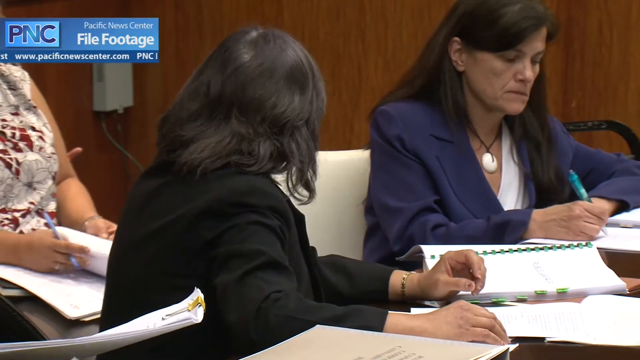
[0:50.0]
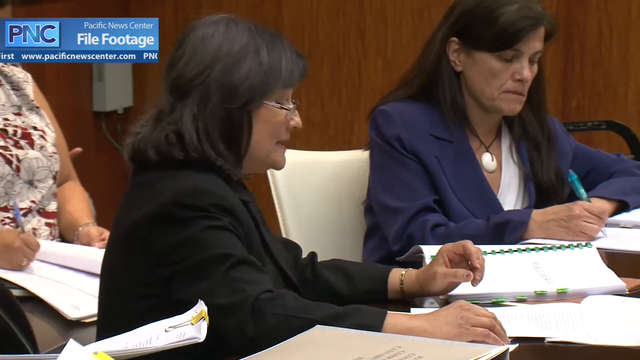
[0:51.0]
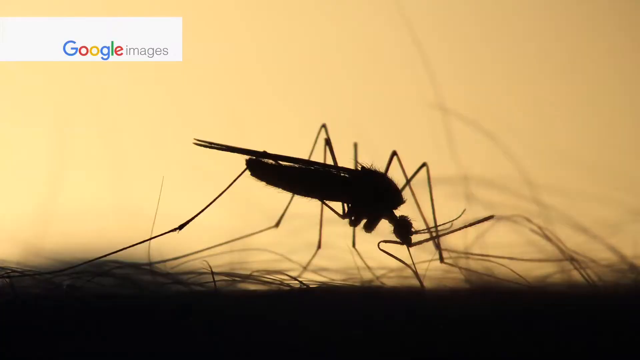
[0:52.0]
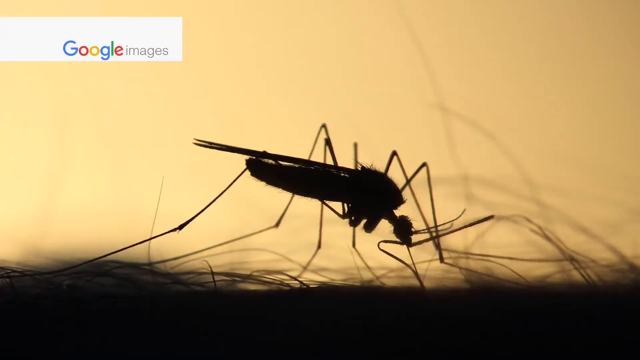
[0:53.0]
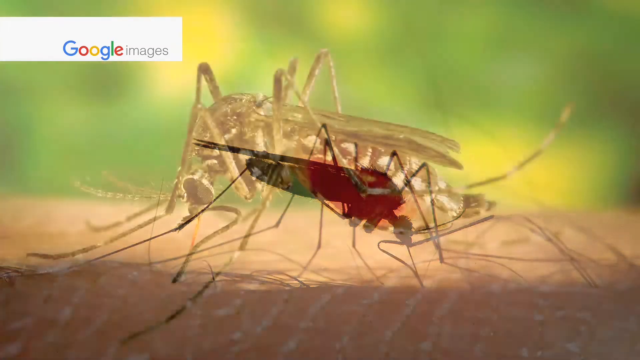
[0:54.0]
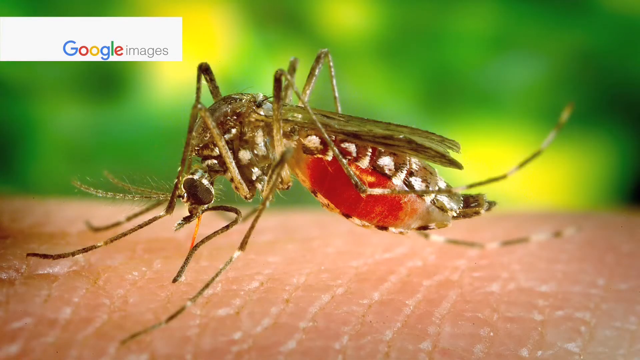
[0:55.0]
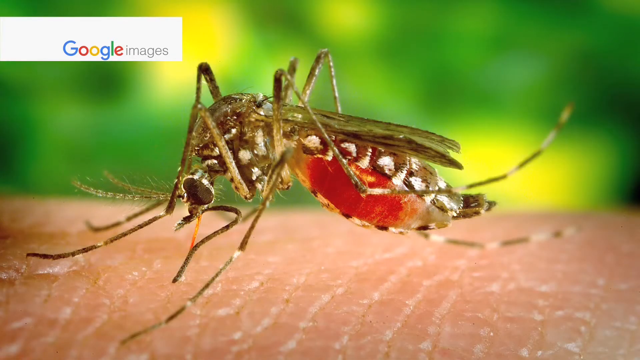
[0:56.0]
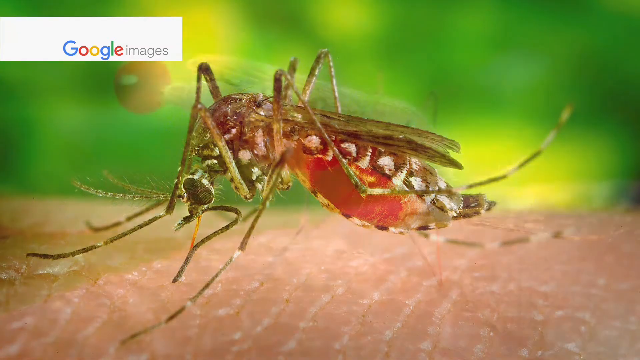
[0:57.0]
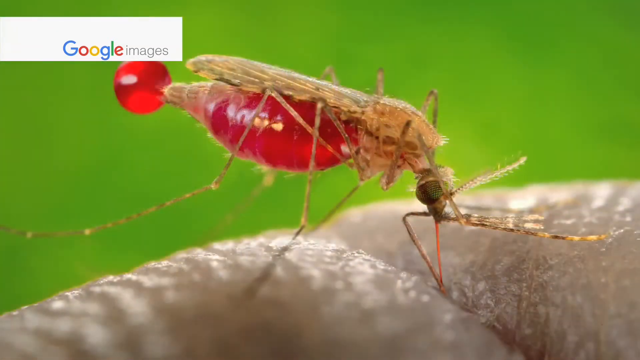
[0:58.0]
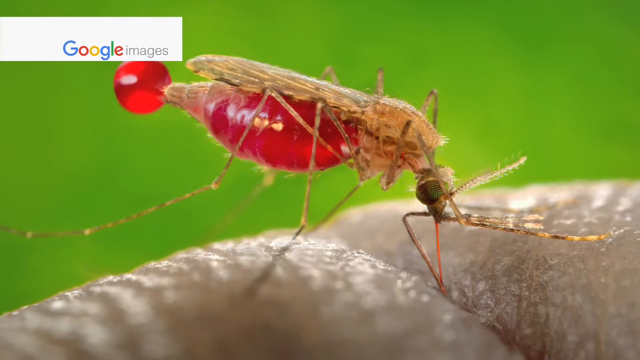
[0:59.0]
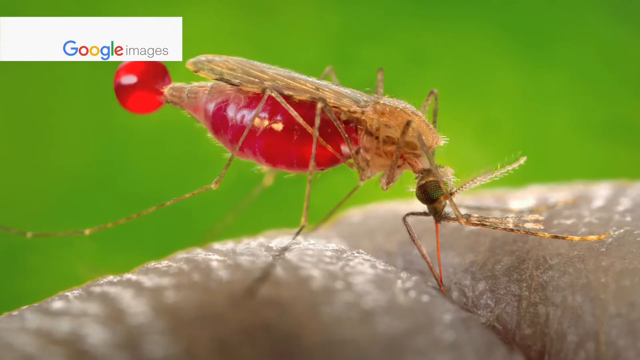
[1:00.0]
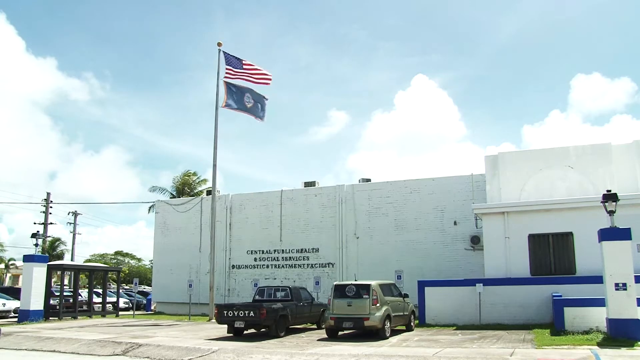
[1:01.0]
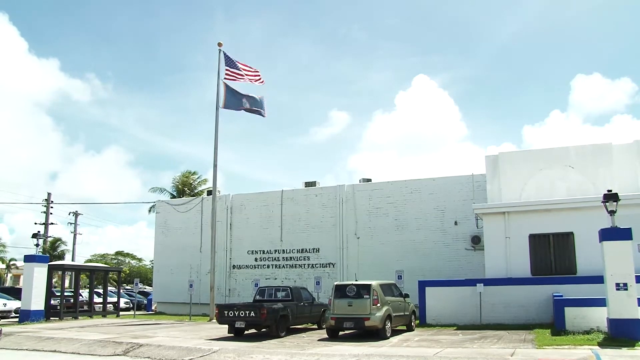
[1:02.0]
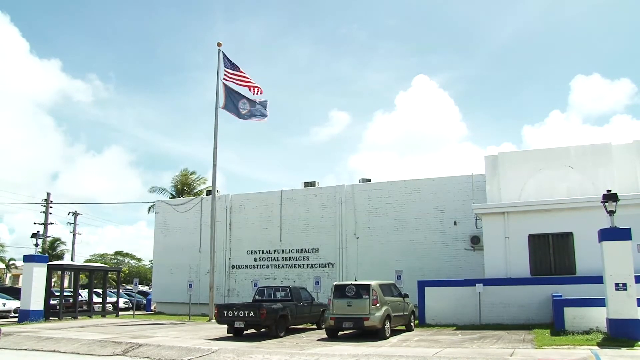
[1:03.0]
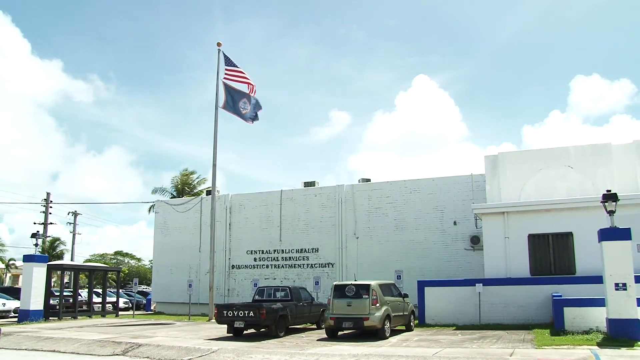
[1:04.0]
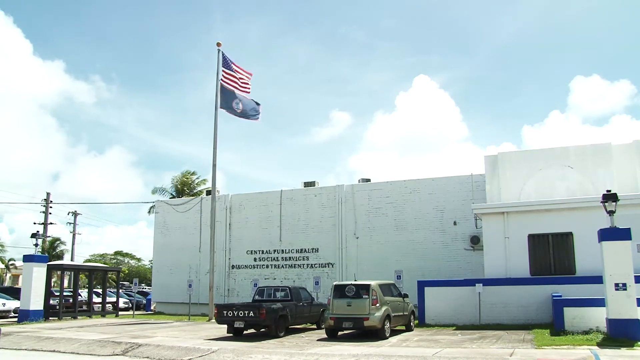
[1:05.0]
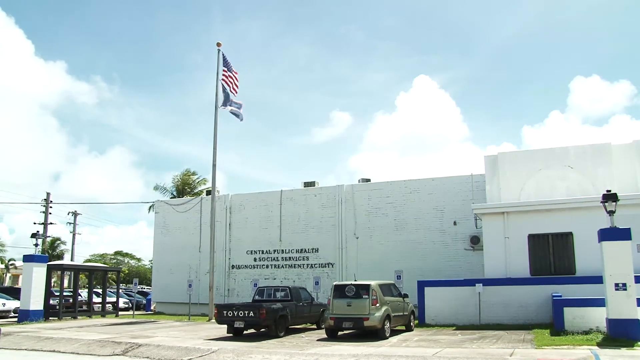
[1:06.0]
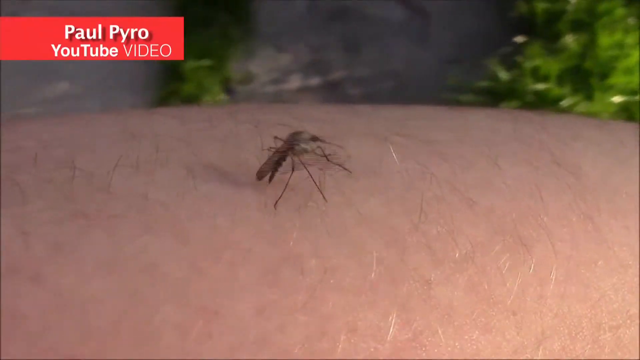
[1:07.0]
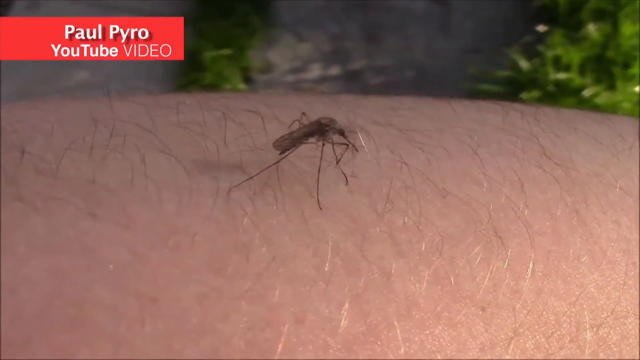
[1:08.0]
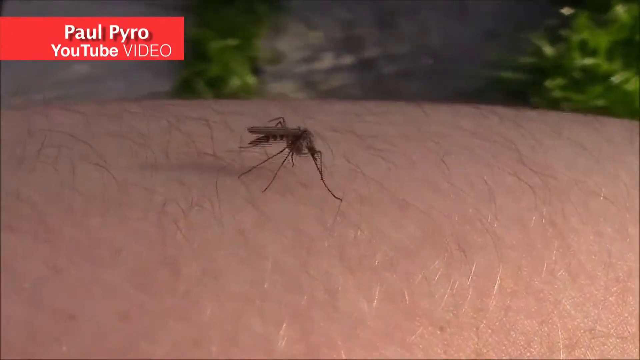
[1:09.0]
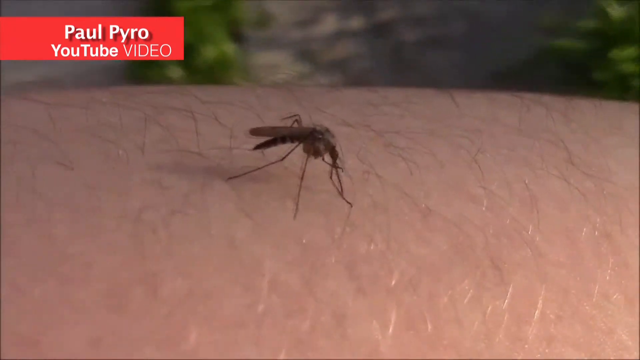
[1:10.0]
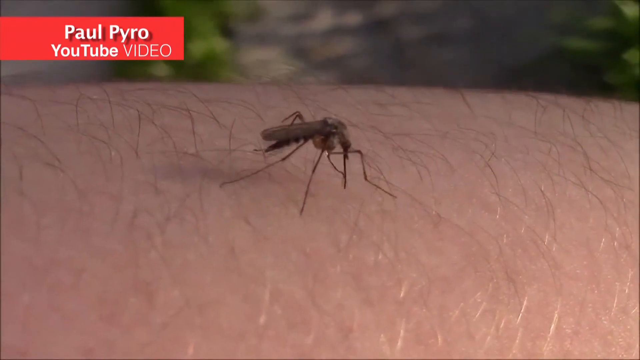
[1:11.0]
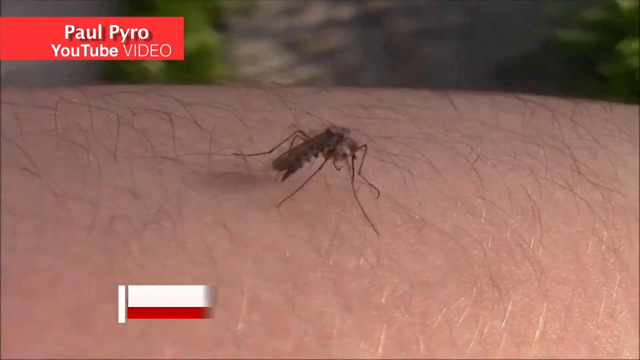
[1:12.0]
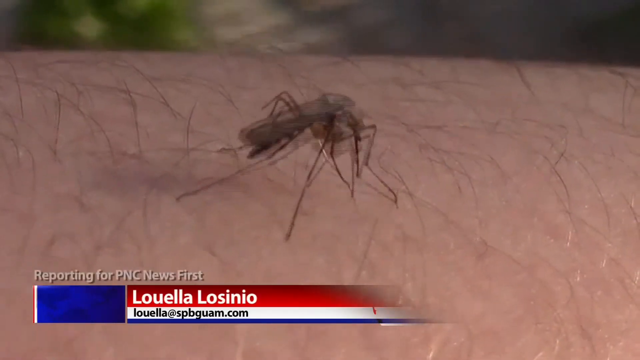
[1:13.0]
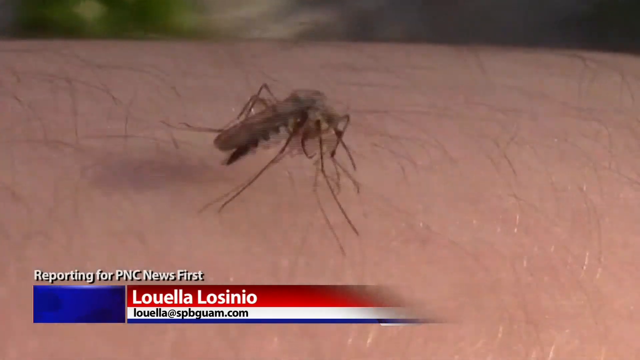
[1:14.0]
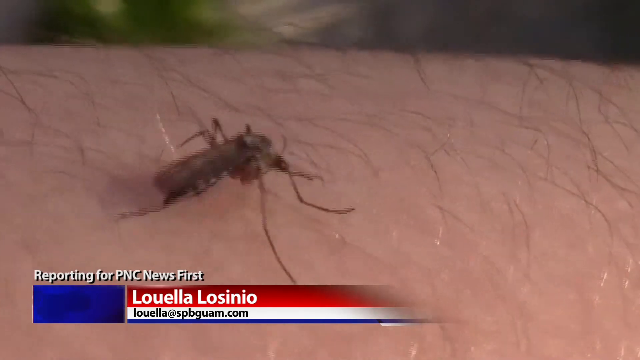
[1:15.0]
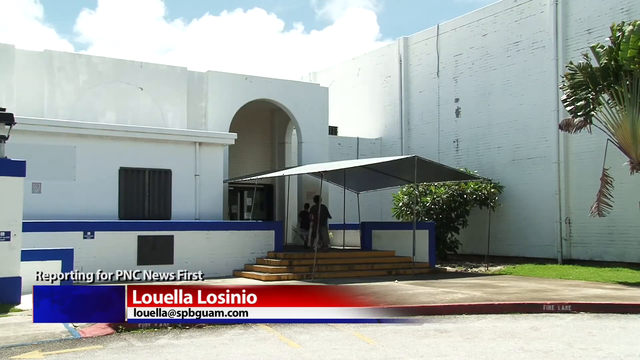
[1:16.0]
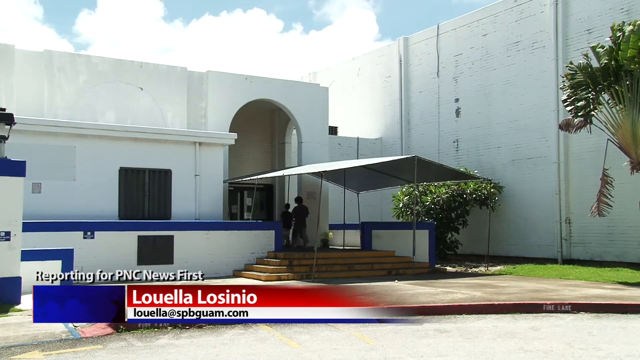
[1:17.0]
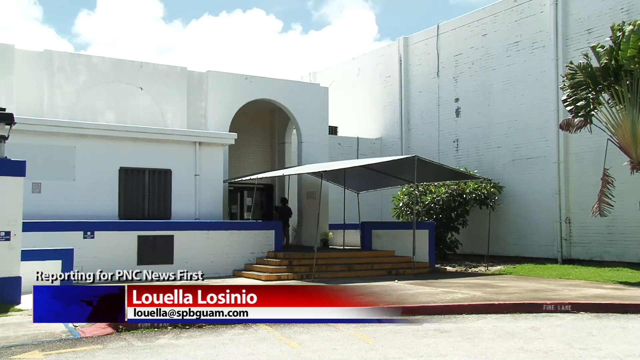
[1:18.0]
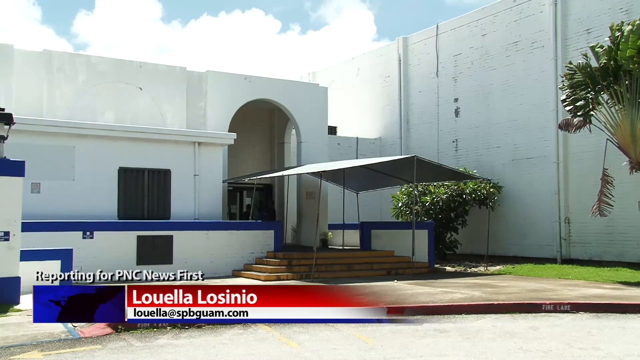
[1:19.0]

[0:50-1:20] The video appears to be a public service announcement about mosquito bites in the area of Guam. Mosquitoes are shown in different forms, including a live mosquito crawling on someone's arm, presumably about to bite them. There are different scenes of different government buildings in the area of Guam, and public health officials are shown meeting.